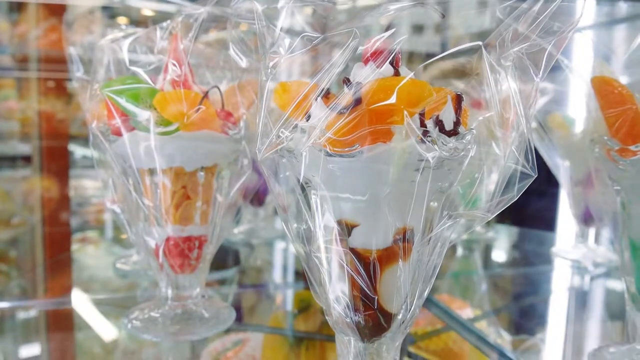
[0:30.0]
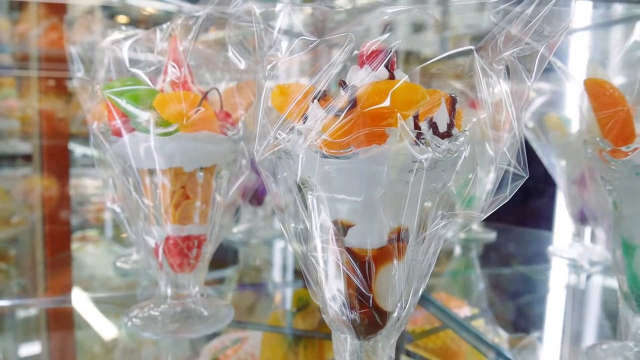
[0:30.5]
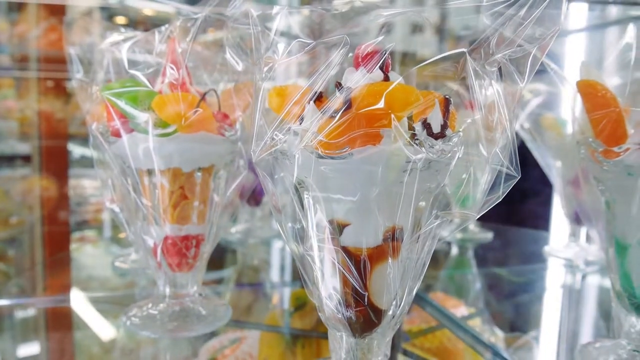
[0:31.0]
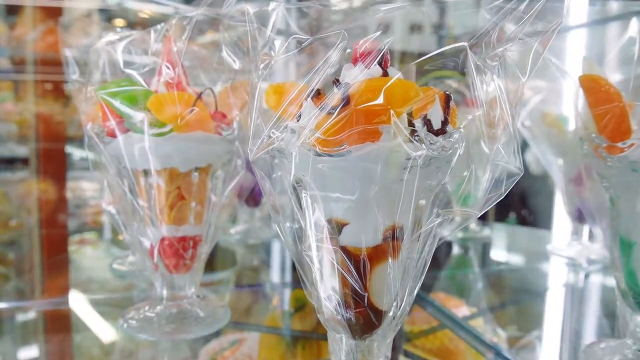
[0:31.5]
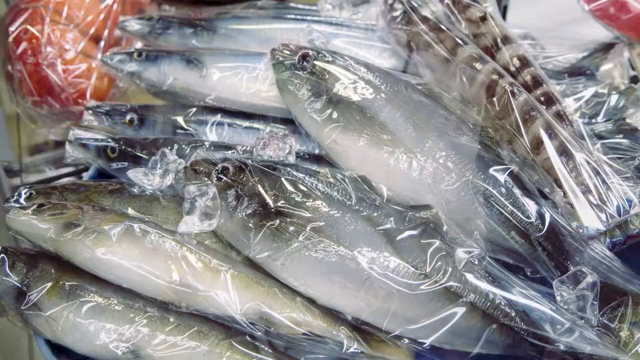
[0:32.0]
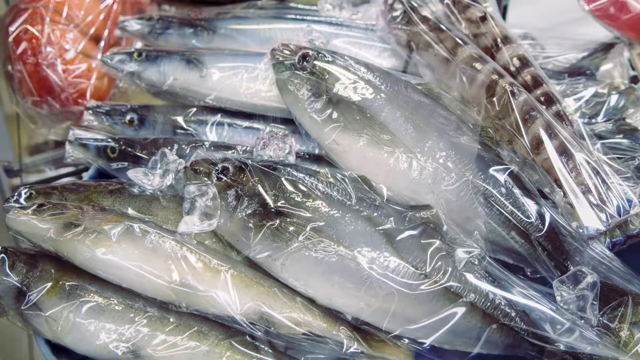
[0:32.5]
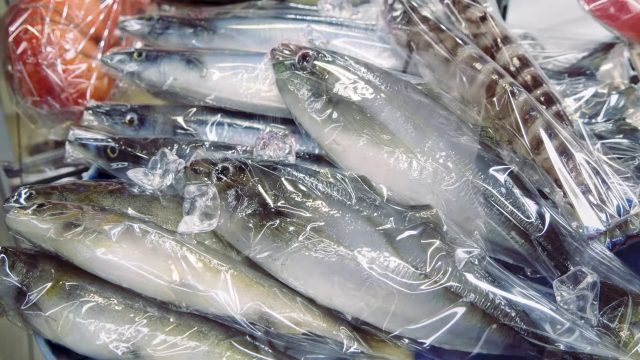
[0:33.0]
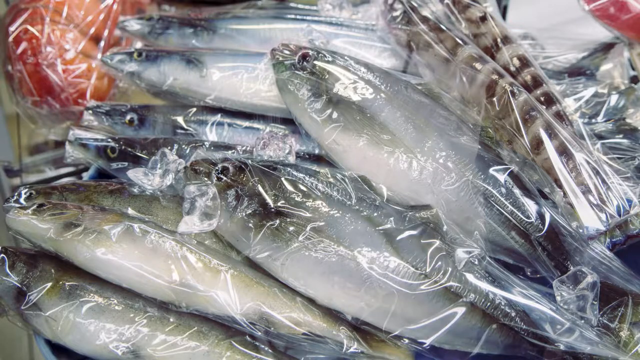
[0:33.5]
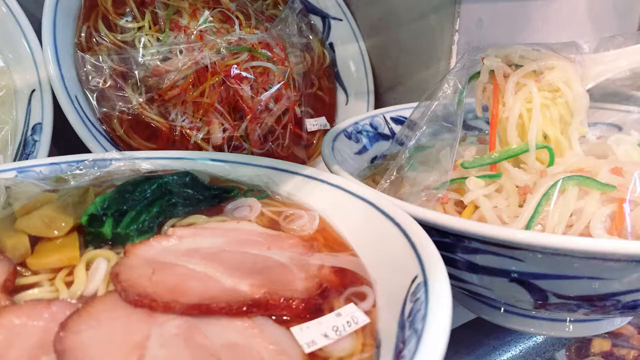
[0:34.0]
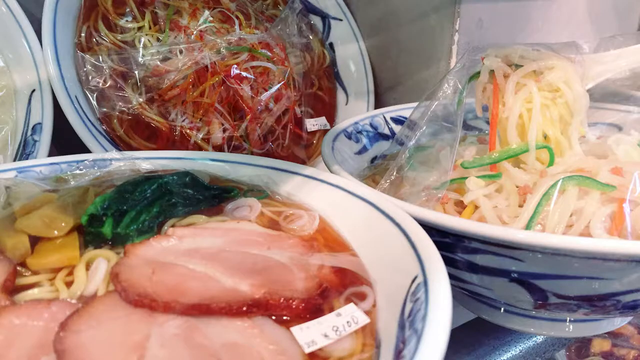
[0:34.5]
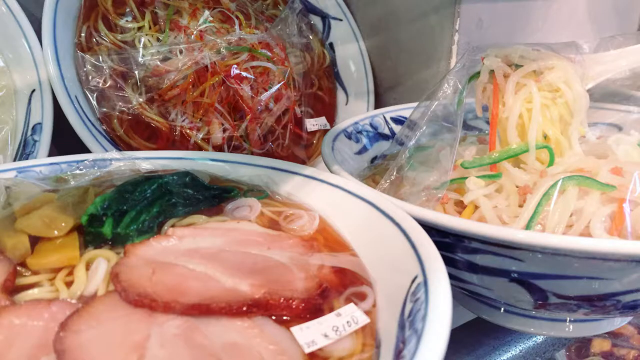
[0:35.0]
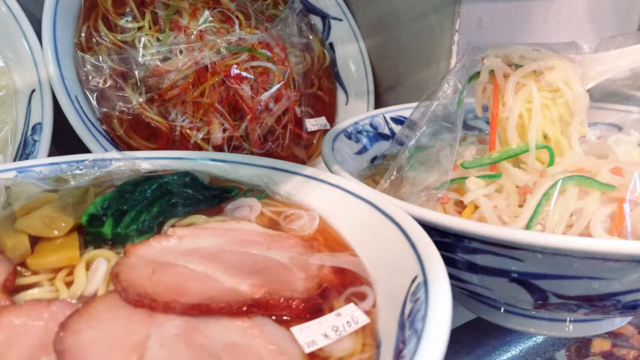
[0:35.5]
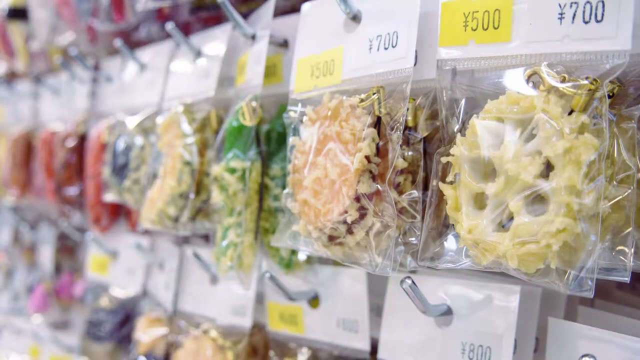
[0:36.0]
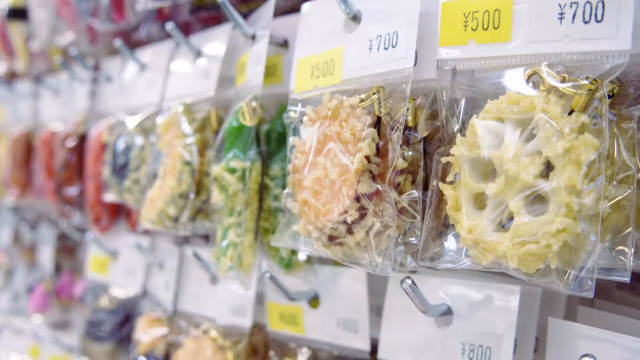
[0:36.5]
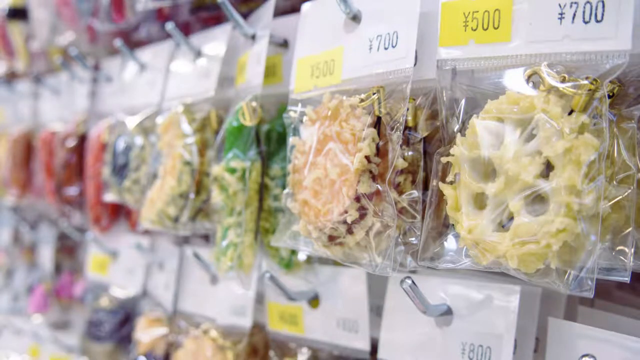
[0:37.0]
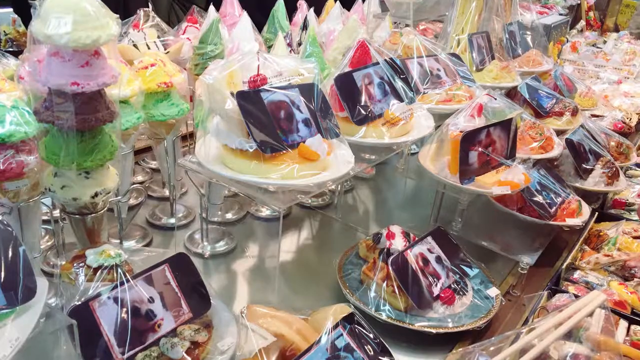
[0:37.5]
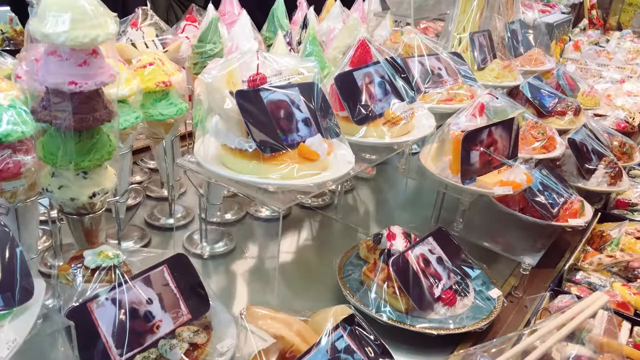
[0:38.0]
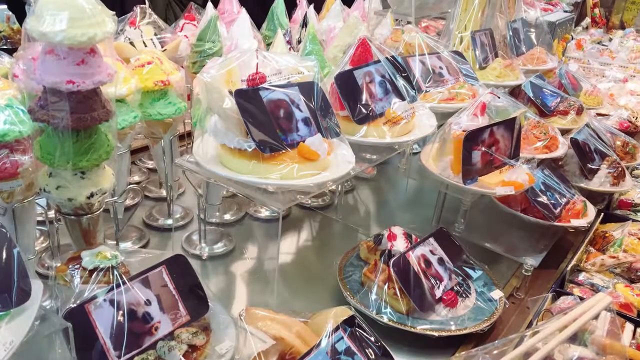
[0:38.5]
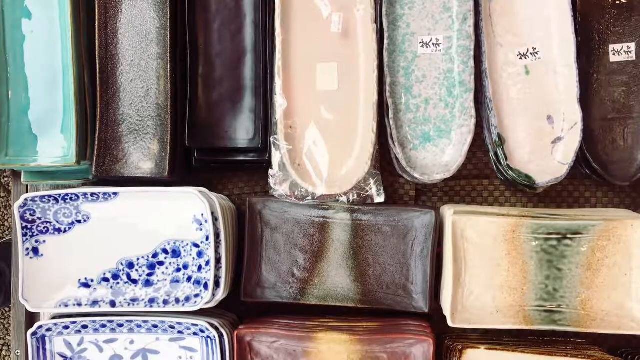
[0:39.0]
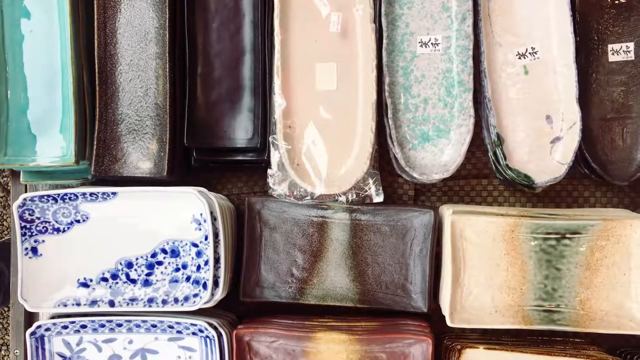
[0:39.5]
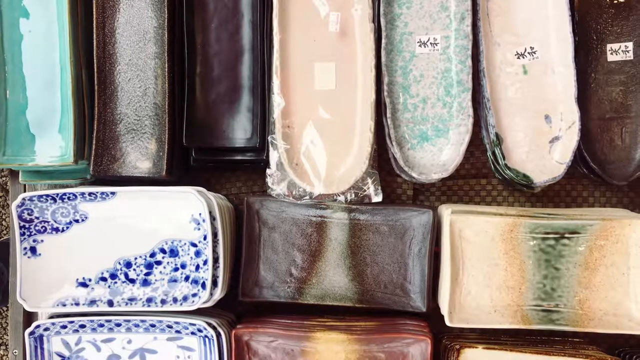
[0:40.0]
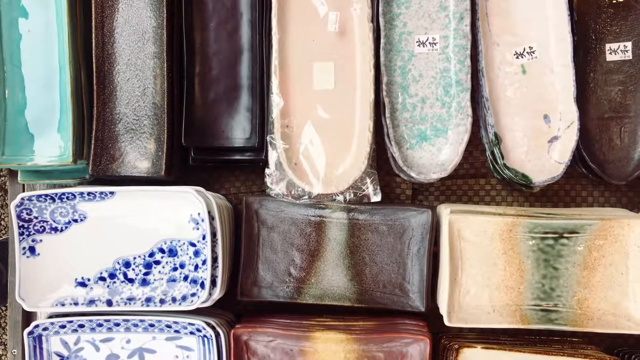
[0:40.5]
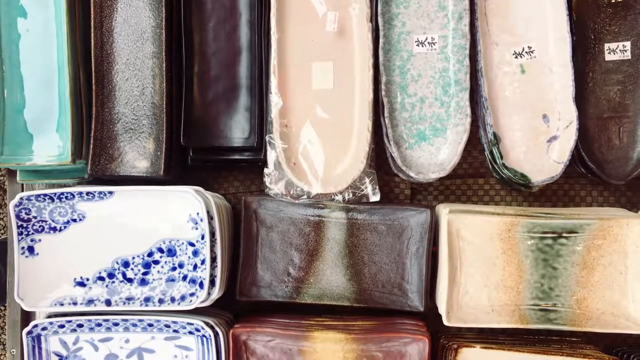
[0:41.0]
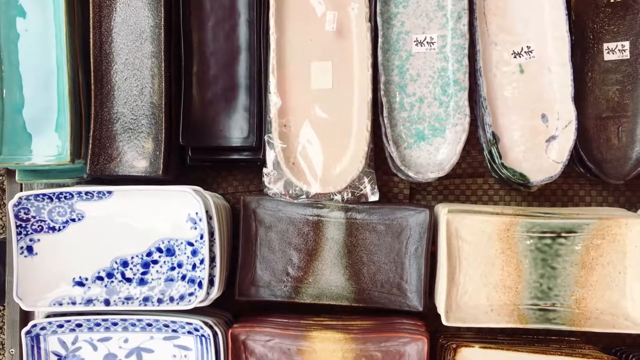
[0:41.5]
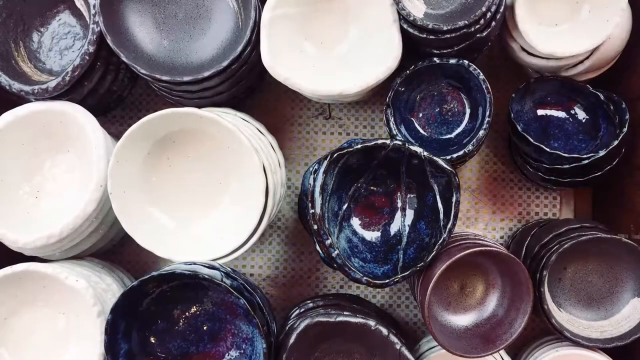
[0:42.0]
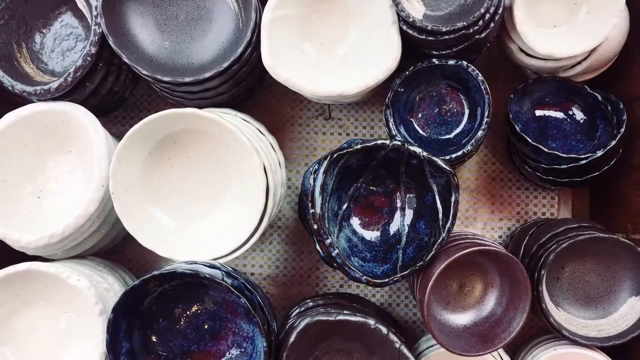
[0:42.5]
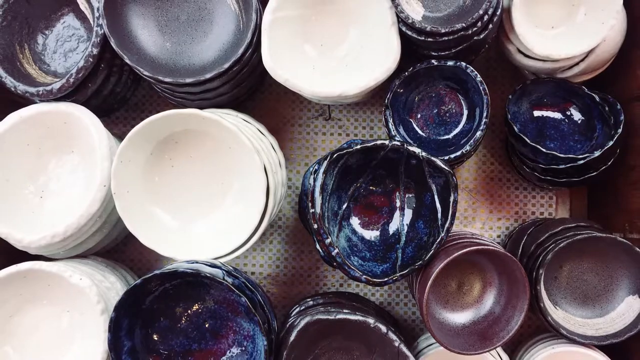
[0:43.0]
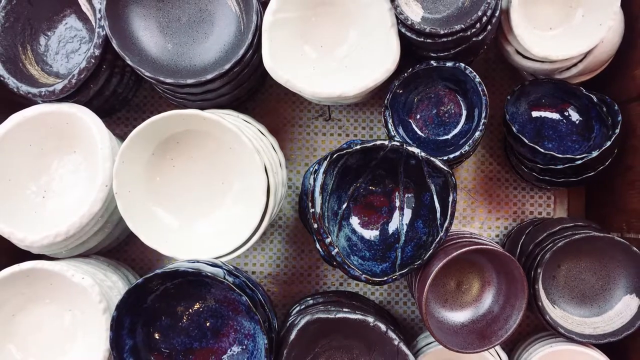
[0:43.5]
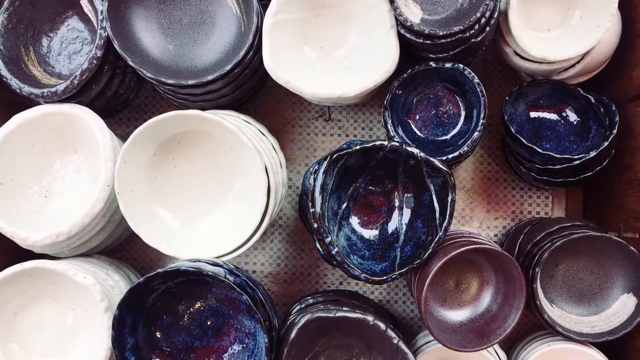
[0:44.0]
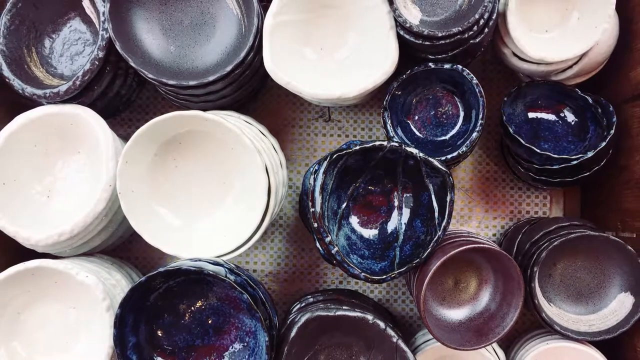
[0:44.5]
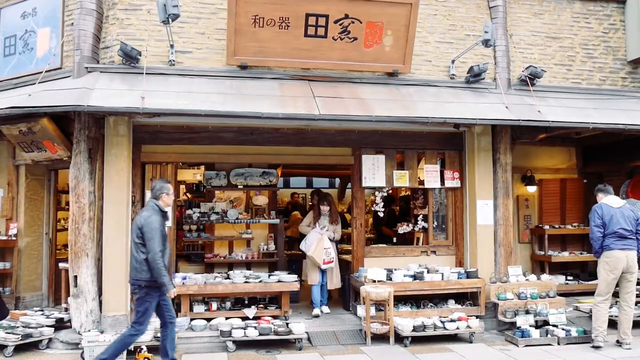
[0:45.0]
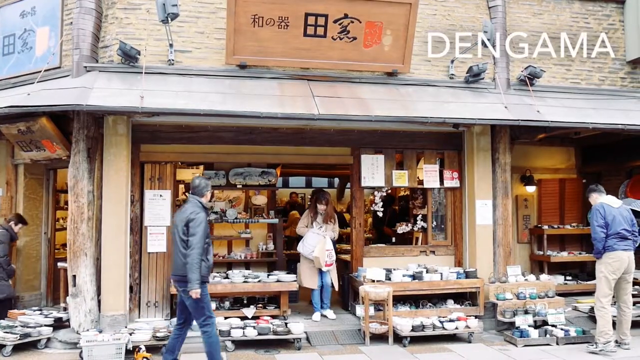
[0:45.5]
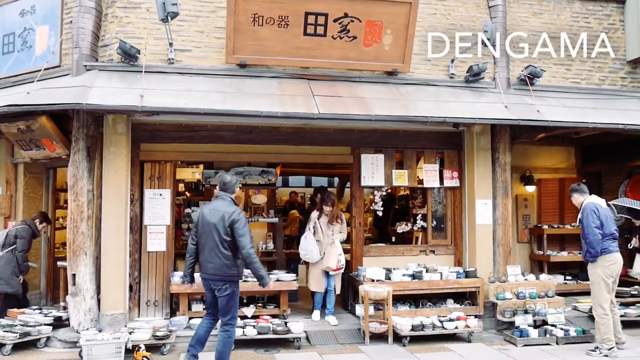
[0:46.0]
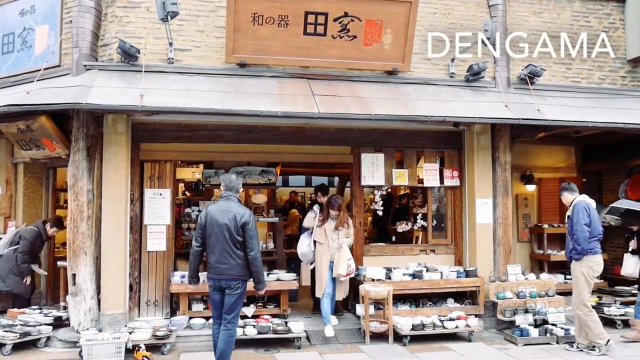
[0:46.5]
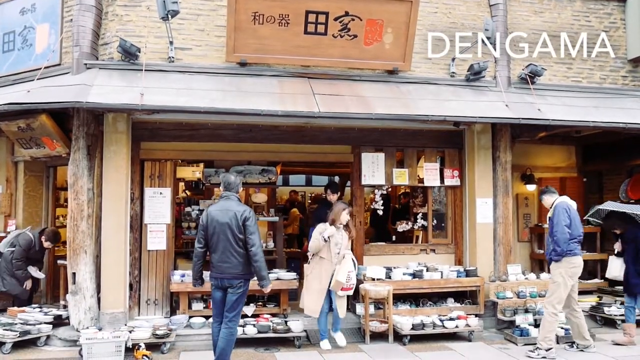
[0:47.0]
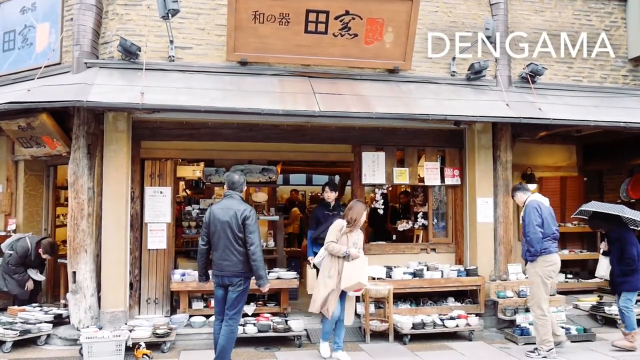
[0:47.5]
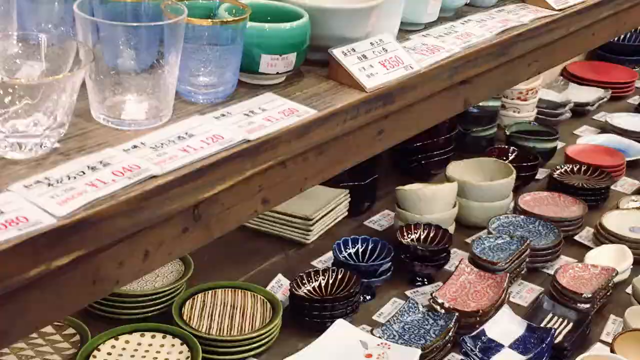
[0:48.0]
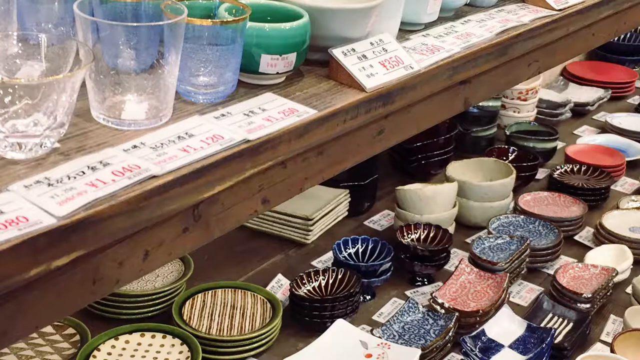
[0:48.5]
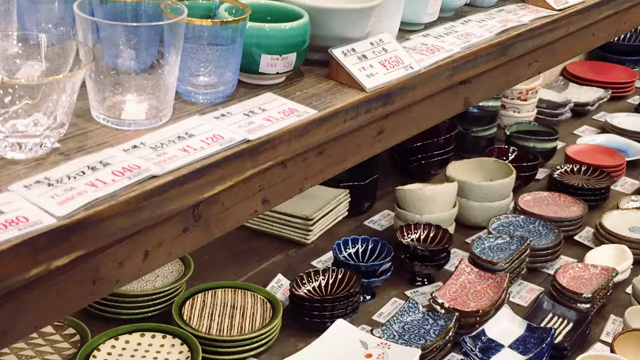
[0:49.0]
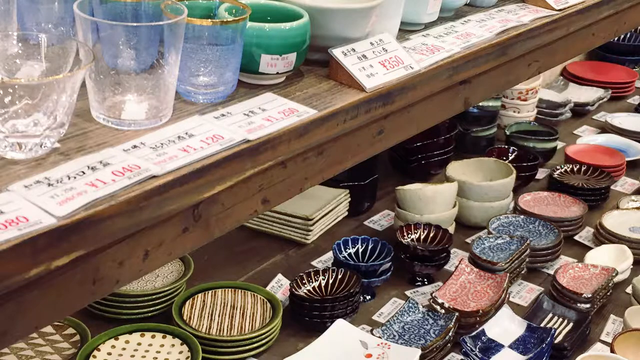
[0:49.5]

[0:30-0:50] House accessories and food items are on display. Some items are covered with clear polythene paper, so the inside is visible, but what is inside cannot be distinguished. People move in the background. Fish are packaged in polythene paper; their scales are removed and their eyes are visible. Other food items are served on a plate and covered with nylon paper, and other items covered with nylon paper hang on shelves. Prices of 500 and 700 in Japanese currency are shown. Other accessories and food items follow, including accessories covered with glass. Some items appear to be phones or something that looks like phones, showing pictures of dogs or puppies; they are covered with polythene paper, displayed on paper and on a plate, and put on a table. Other structures look like plates of different colors, black, brown, blue and pink, and they are well decorated. A dish is white, black, brown and bluish. A woman comes out of the shop, a man looks at the items, and another man looks inside the shop, where the cashier is. The woman carries a backpack and polythene paper, and another person carries an umbrella; all of them seem to be shopping and looking at the items.